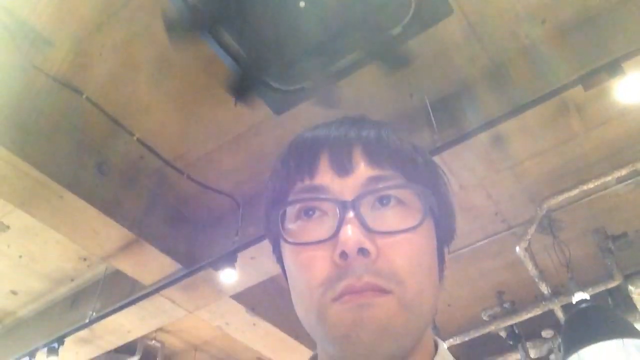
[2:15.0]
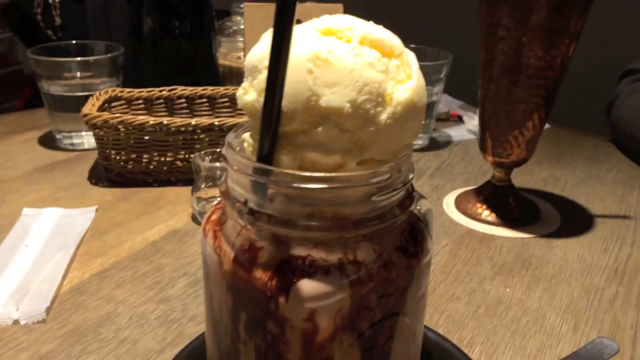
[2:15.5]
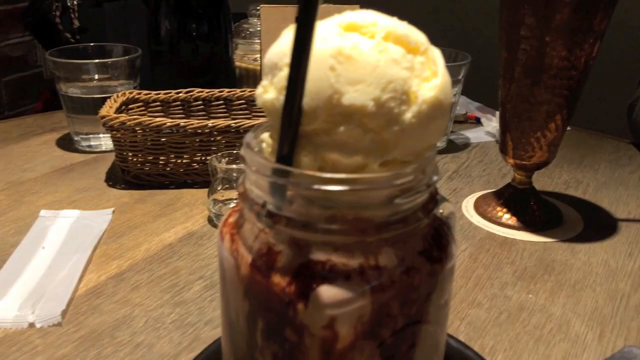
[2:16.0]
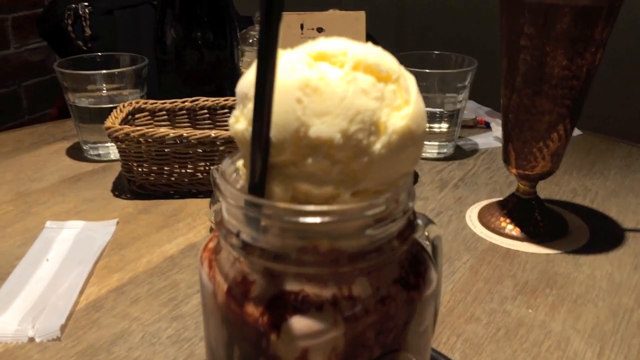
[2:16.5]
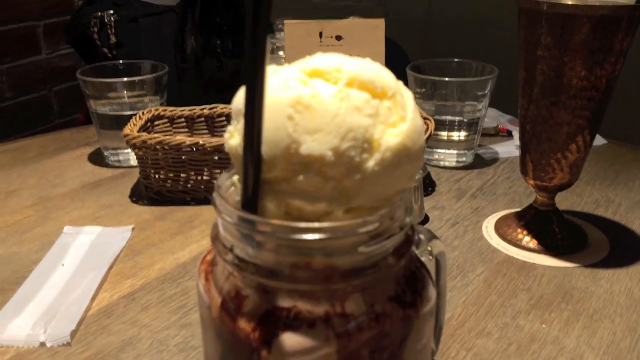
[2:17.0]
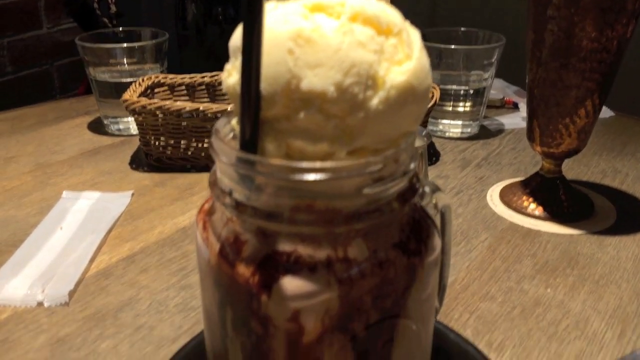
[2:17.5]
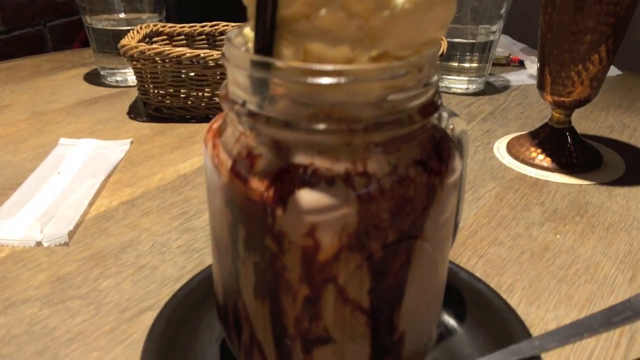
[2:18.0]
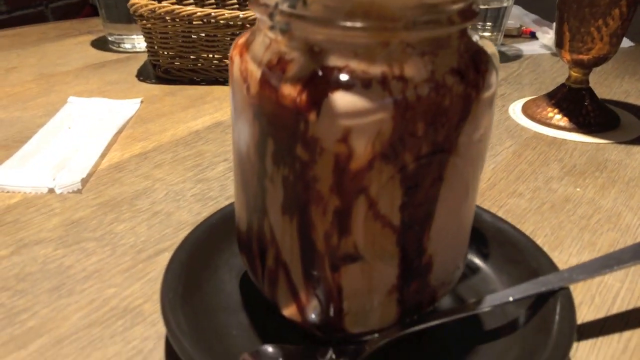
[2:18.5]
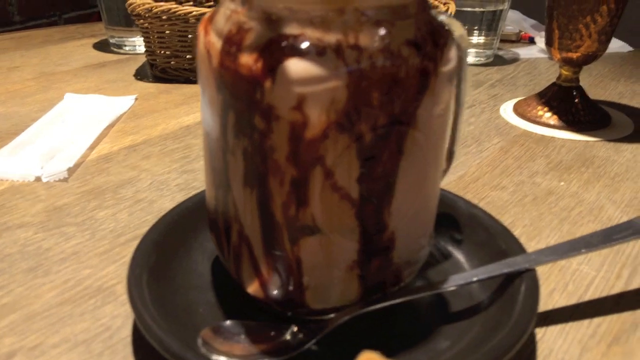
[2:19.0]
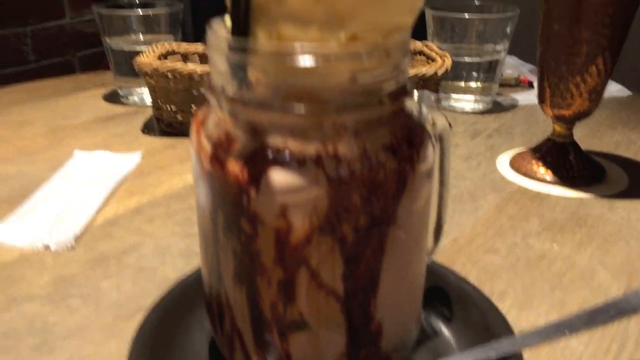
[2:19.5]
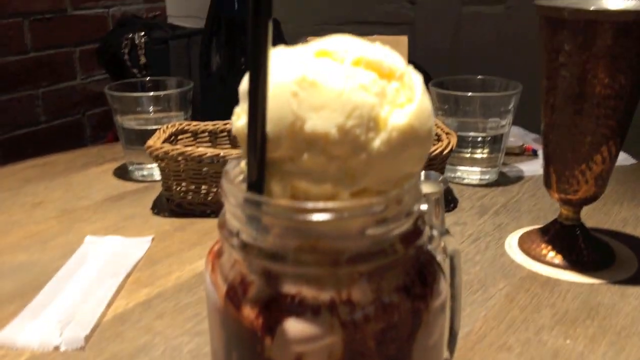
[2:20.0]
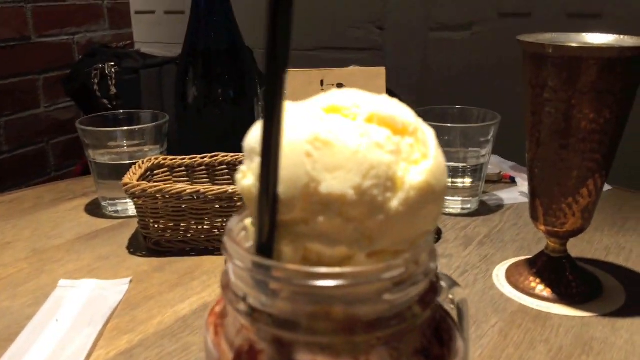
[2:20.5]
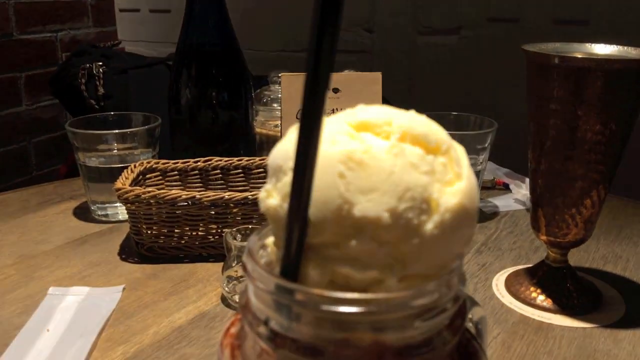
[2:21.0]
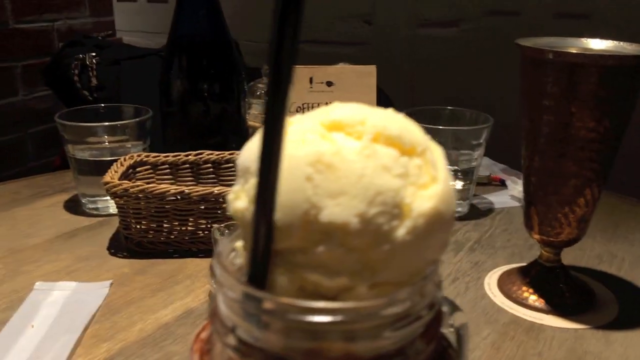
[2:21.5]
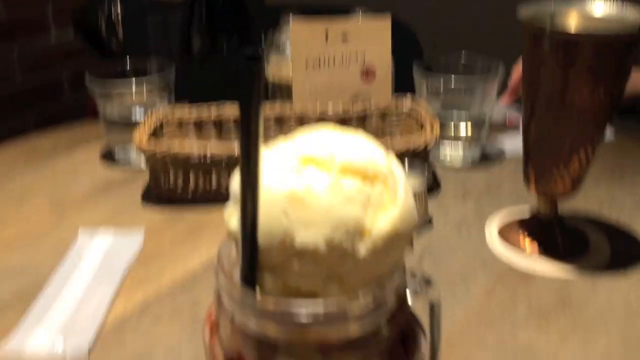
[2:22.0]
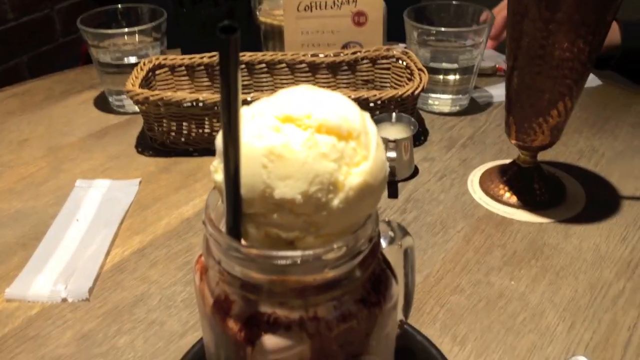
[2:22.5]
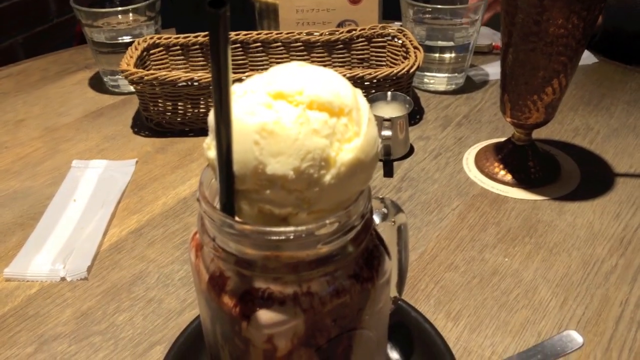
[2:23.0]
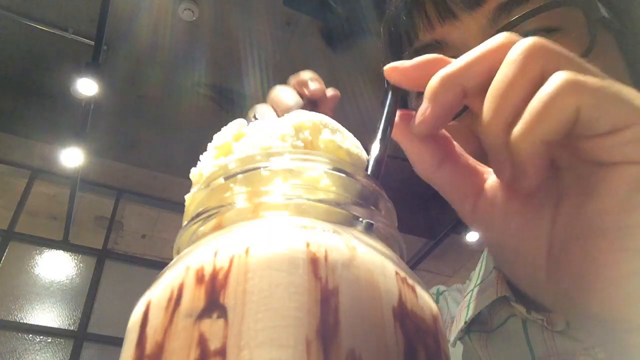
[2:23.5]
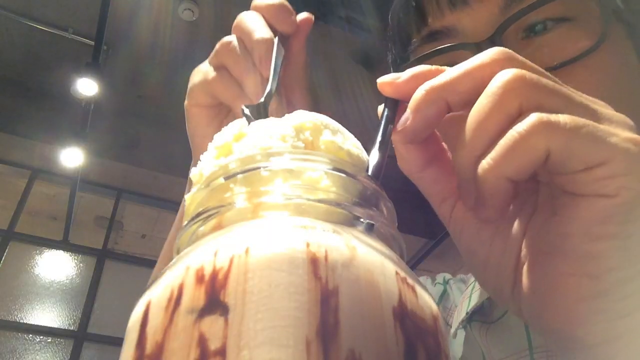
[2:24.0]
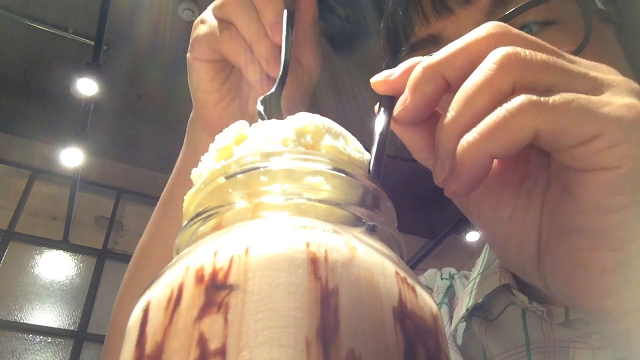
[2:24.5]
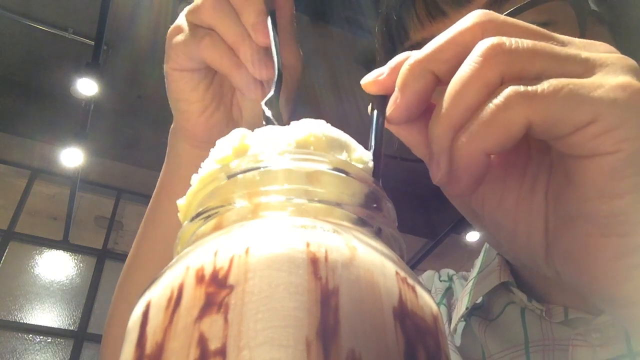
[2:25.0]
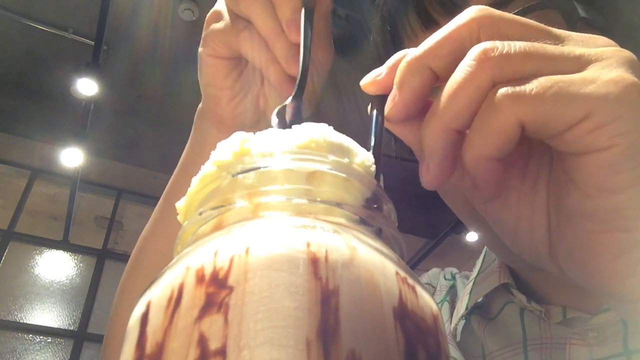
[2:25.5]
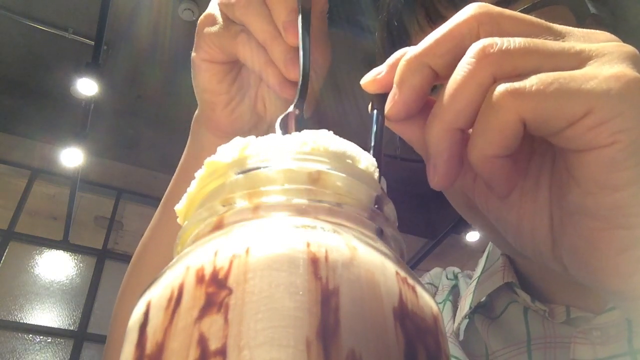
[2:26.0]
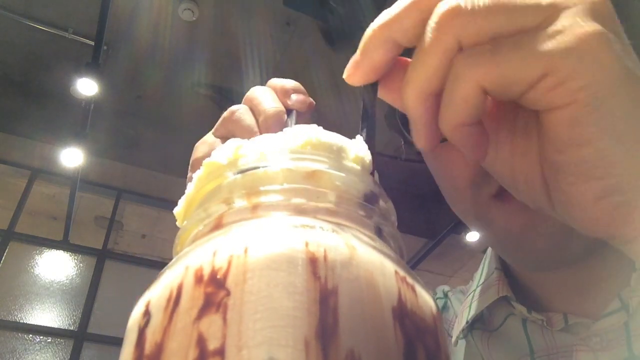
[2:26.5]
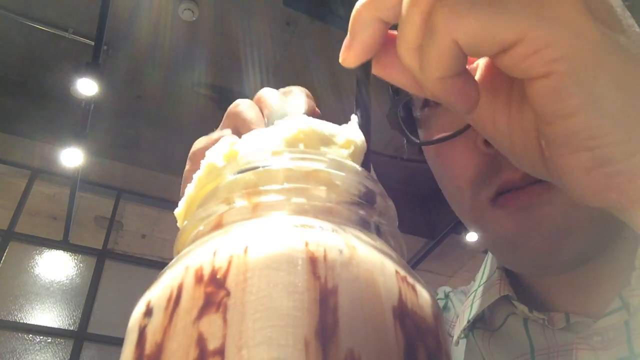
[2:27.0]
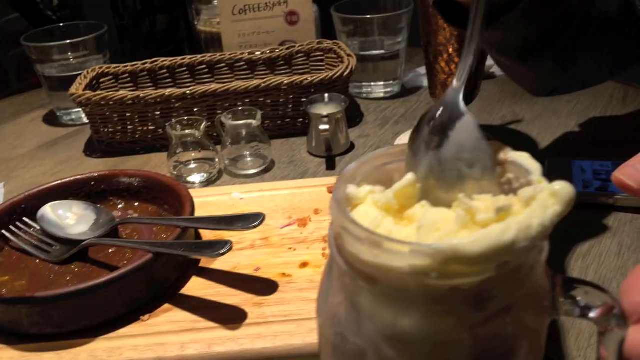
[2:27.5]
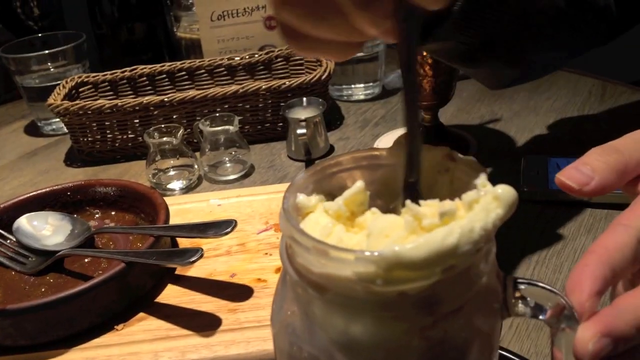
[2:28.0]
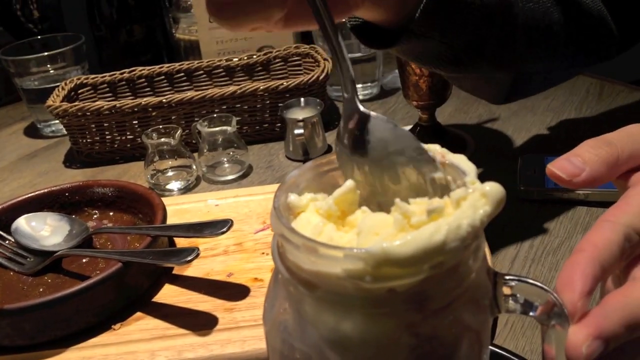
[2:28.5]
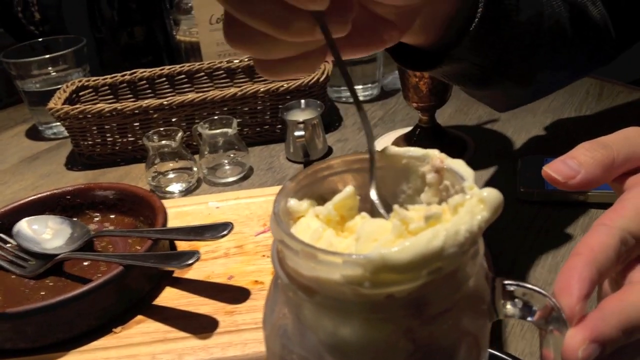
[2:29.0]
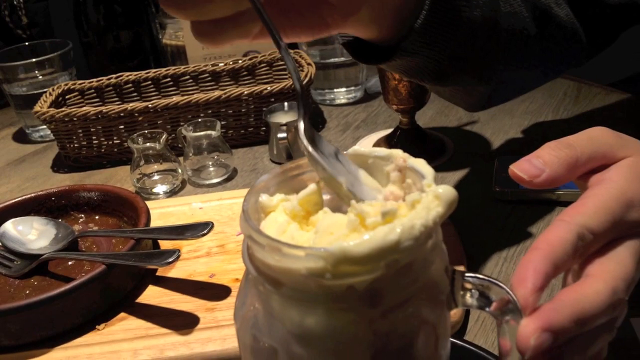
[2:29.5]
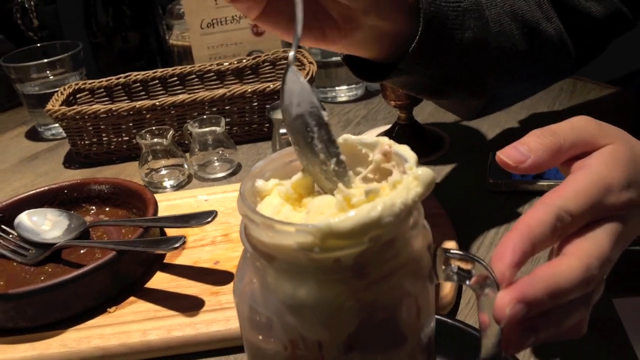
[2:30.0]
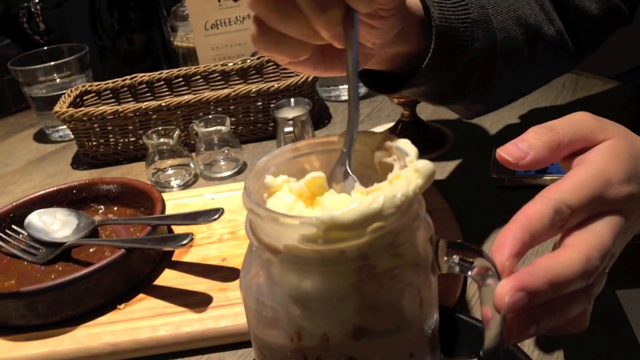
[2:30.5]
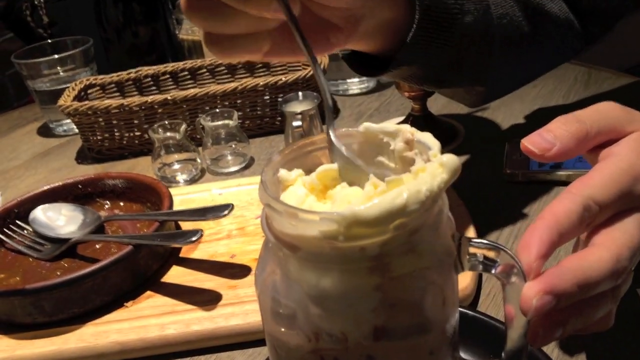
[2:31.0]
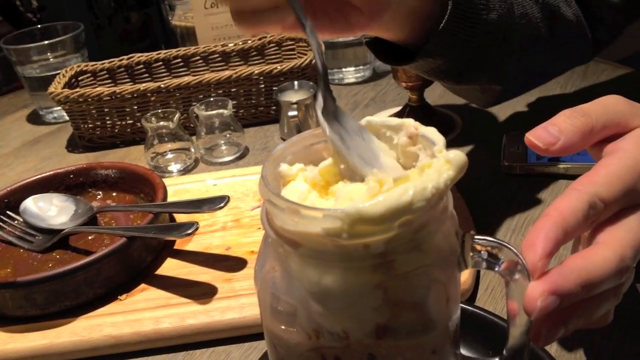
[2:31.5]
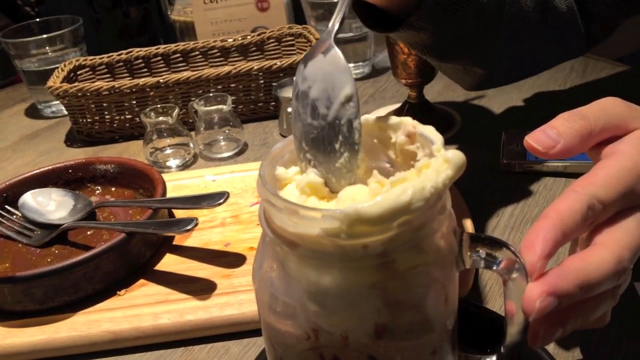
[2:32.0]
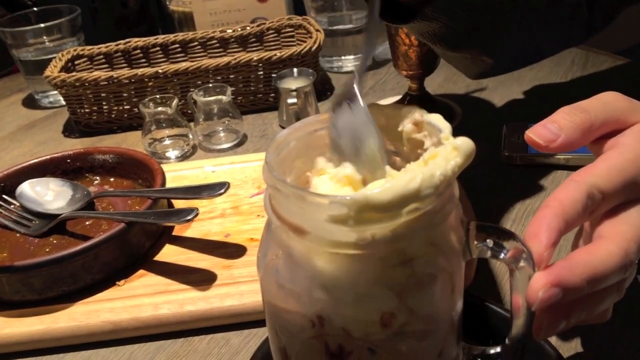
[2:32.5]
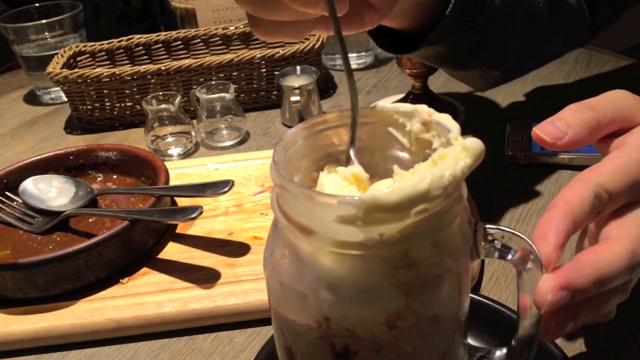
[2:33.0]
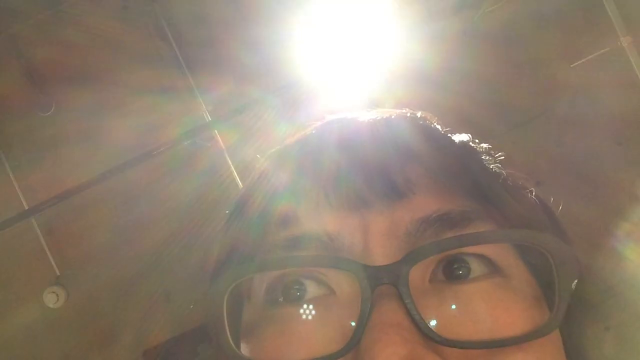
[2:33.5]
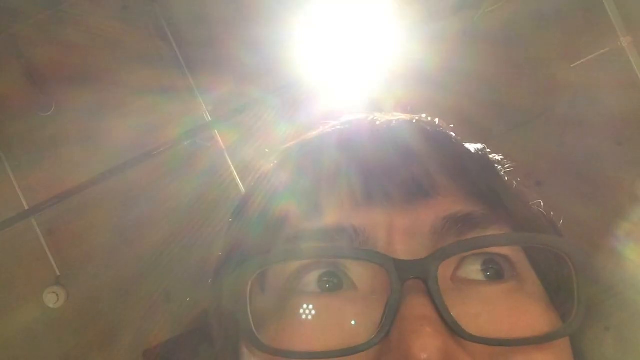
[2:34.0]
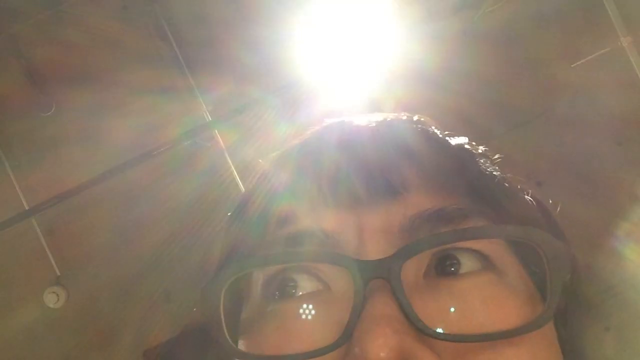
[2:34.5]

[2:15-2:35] At a new table, or the same table cleared off, the man eats from a jar of ice cream that looks like an old-school mason jar, containing some kind of ice cream with pastry mixed in, which he mixes together with his spoon. His face looks sarcastic and funny, as if he can't believe what he is eating. A more detailed view shows him dipping his spoon into the mason jar, combining the layers of the dessert cup, and a little pours out. His face shows he is very happy to be eating it and looks like he is in heaven. Only the empty plates in the background and the mason jar with this last dessert are seen.